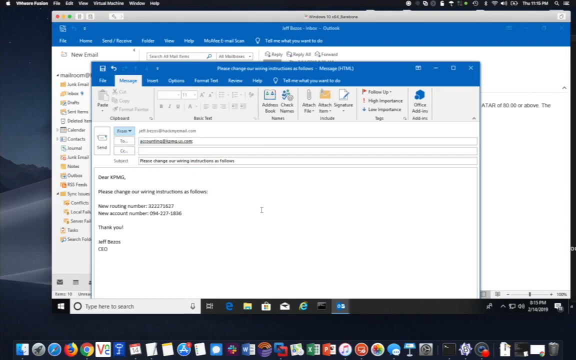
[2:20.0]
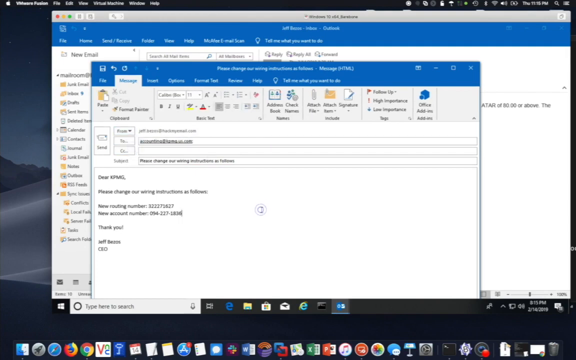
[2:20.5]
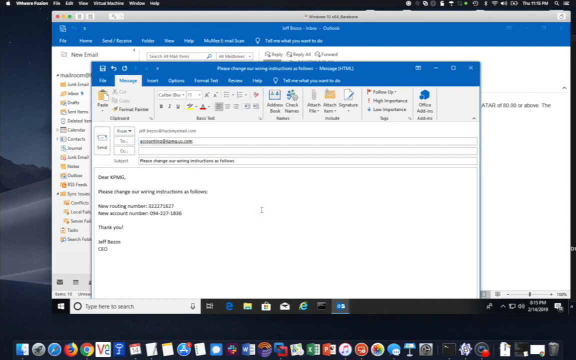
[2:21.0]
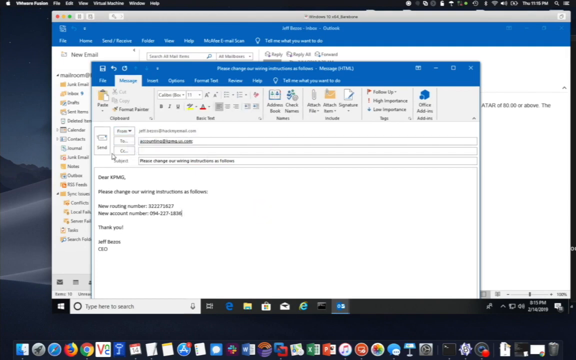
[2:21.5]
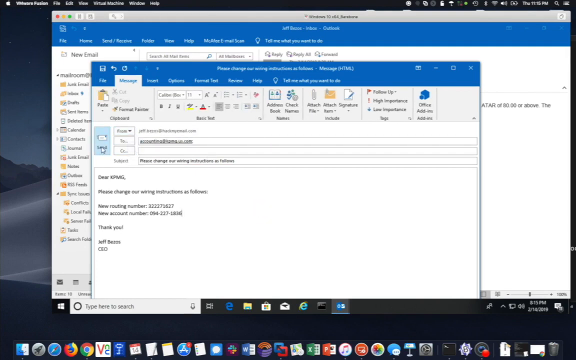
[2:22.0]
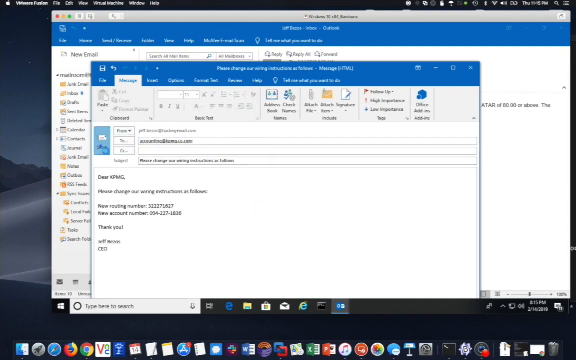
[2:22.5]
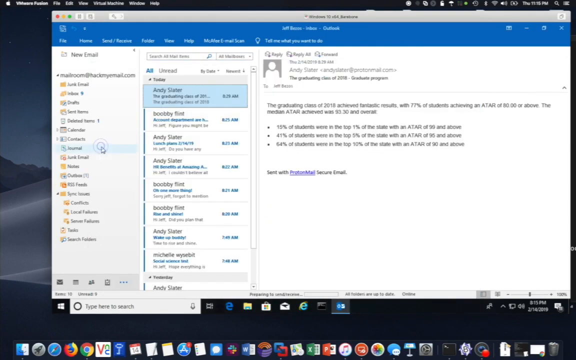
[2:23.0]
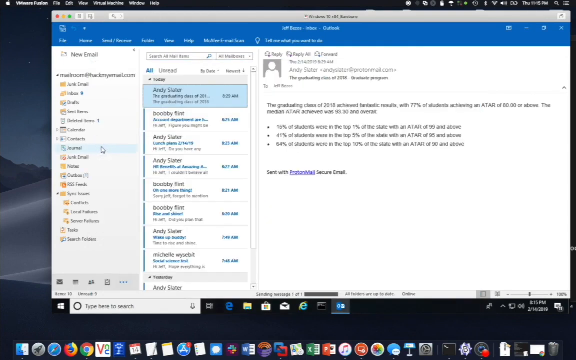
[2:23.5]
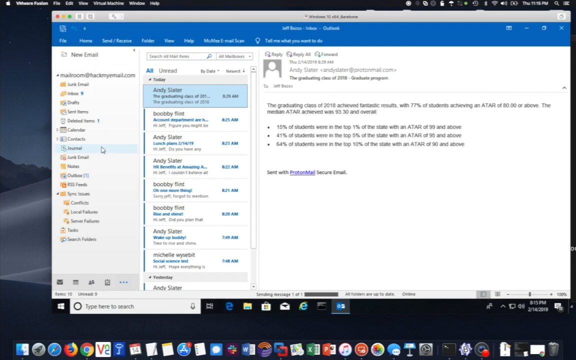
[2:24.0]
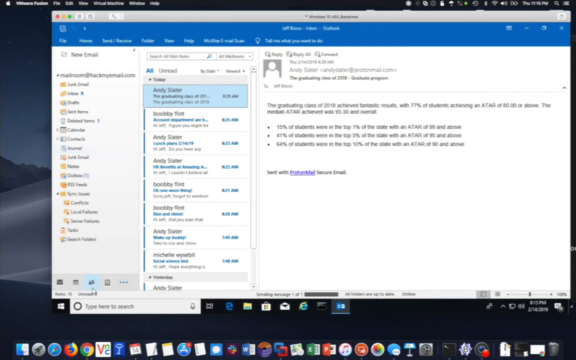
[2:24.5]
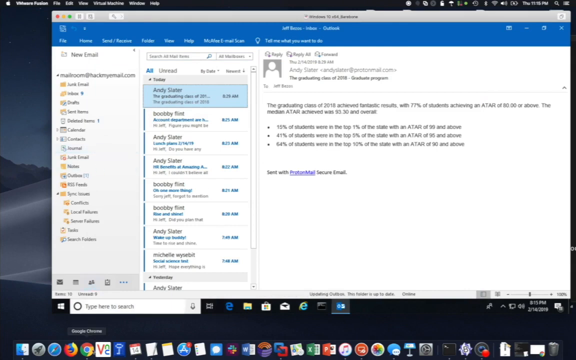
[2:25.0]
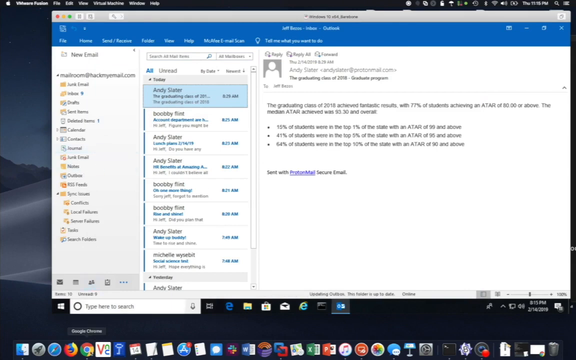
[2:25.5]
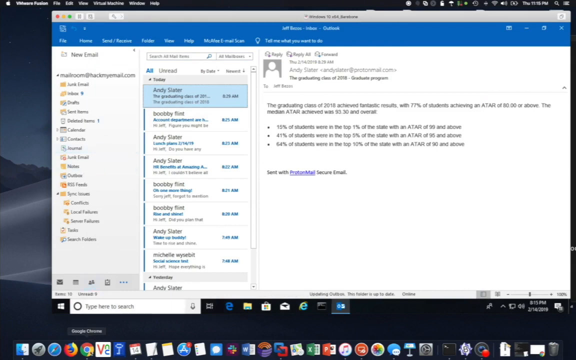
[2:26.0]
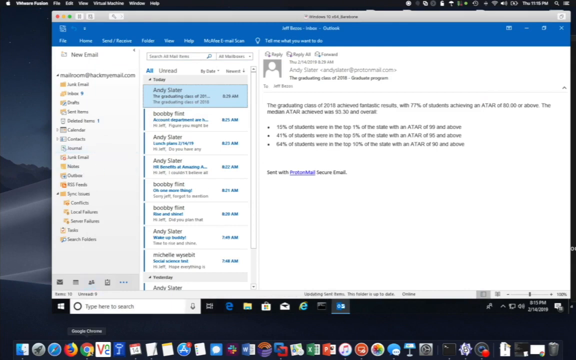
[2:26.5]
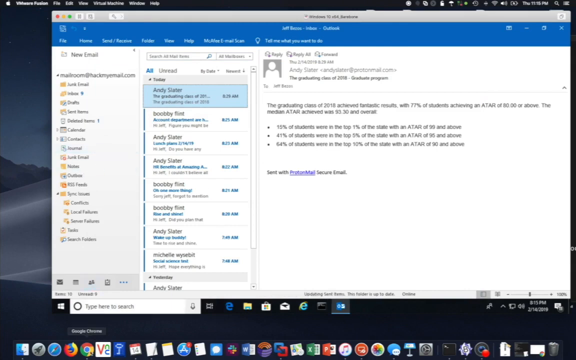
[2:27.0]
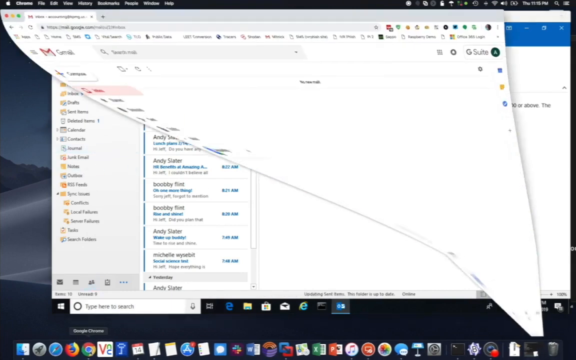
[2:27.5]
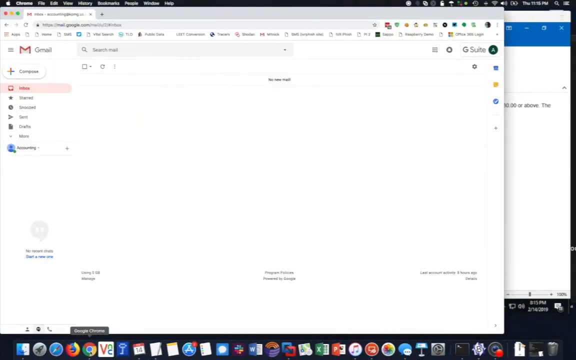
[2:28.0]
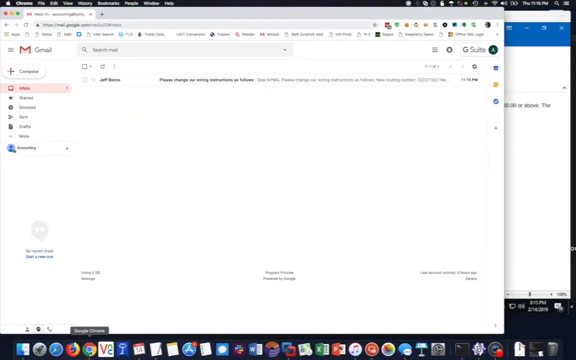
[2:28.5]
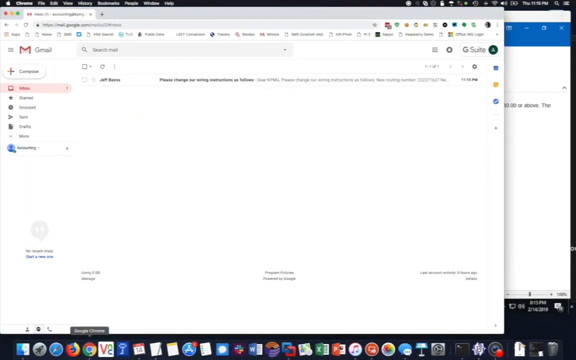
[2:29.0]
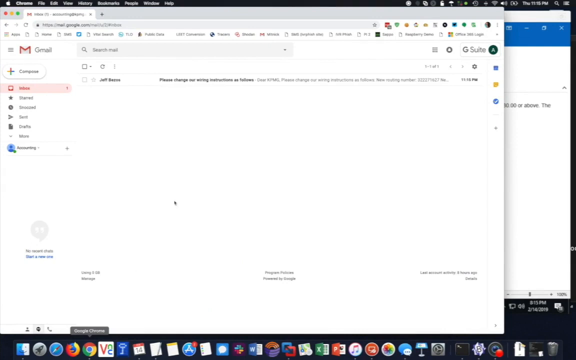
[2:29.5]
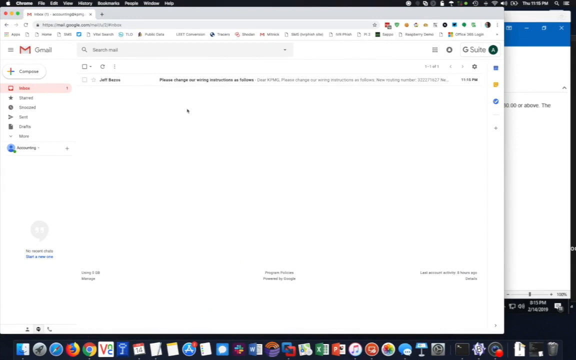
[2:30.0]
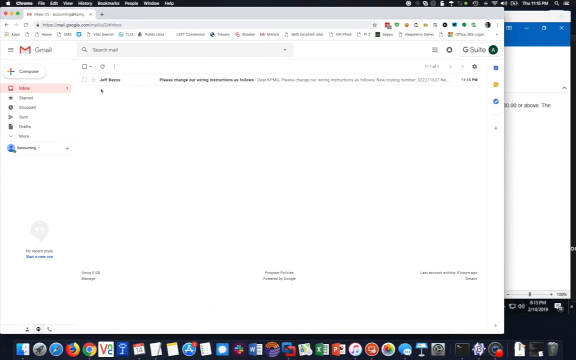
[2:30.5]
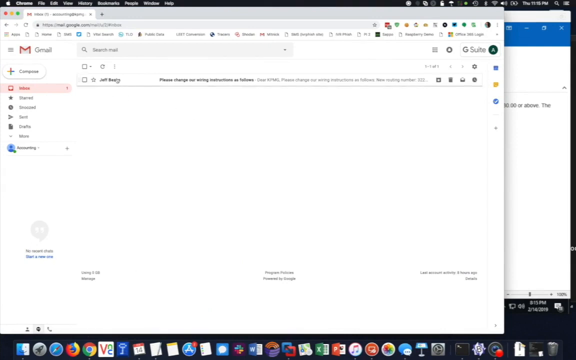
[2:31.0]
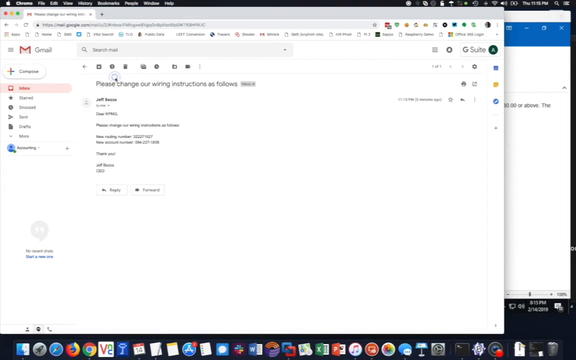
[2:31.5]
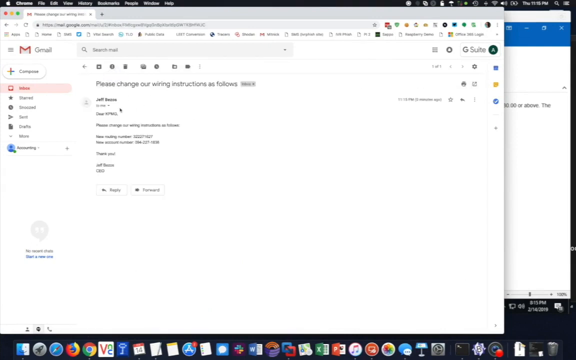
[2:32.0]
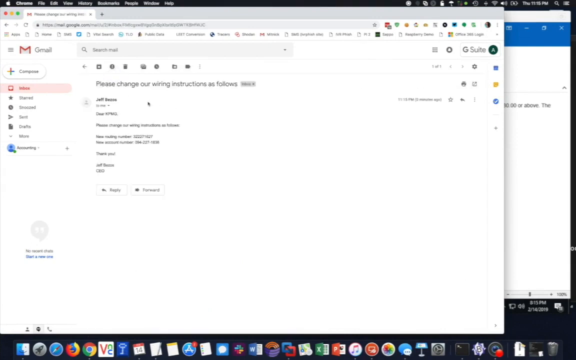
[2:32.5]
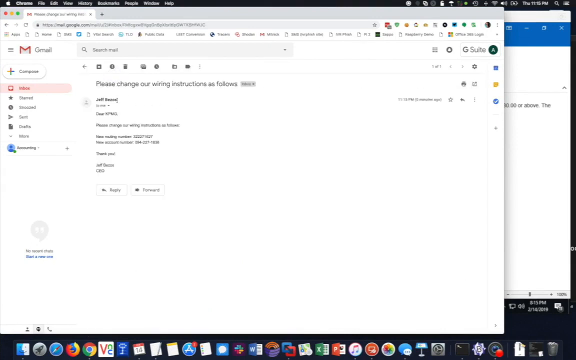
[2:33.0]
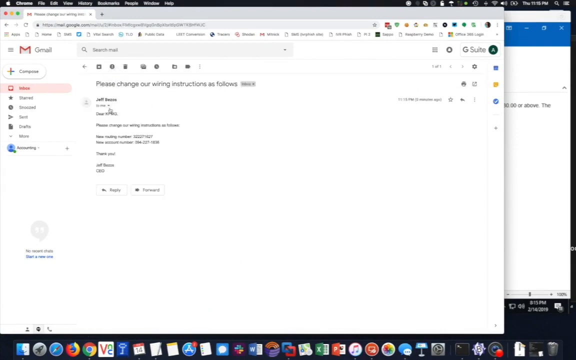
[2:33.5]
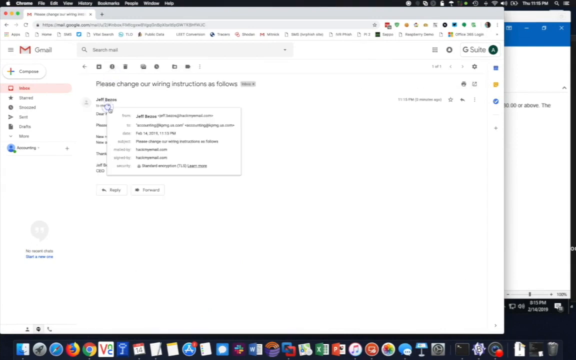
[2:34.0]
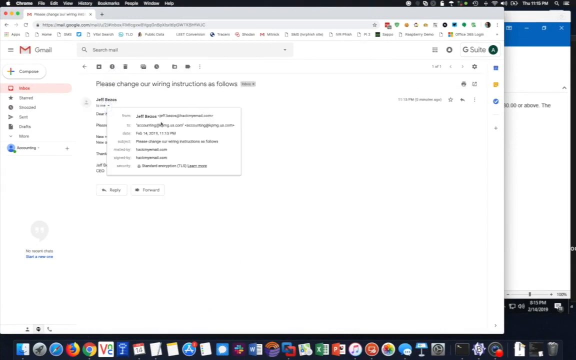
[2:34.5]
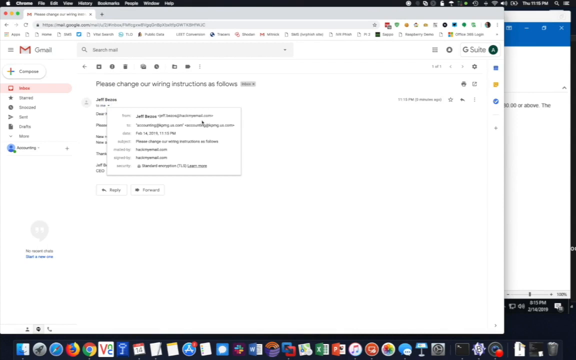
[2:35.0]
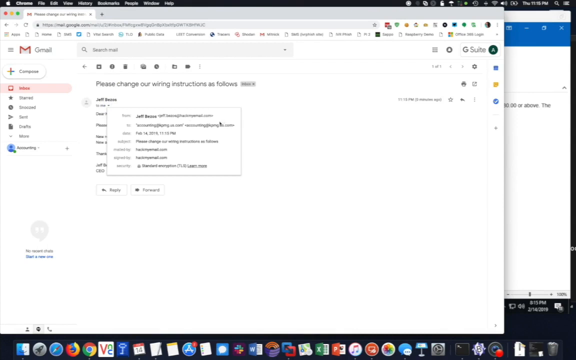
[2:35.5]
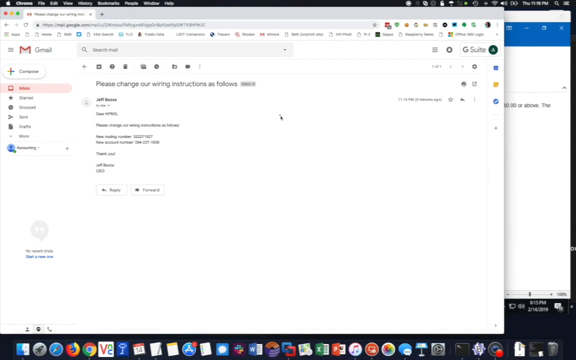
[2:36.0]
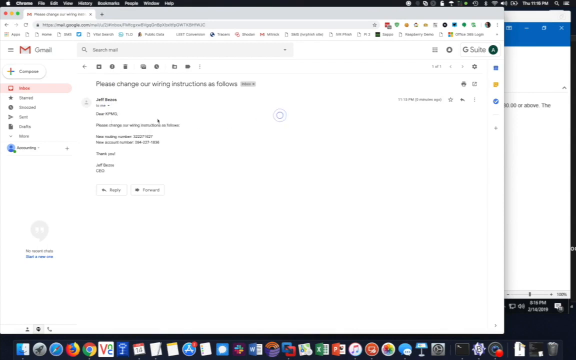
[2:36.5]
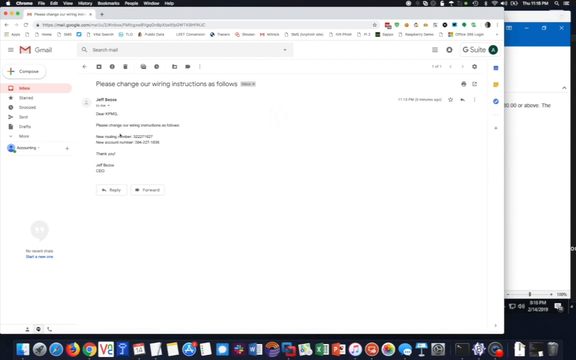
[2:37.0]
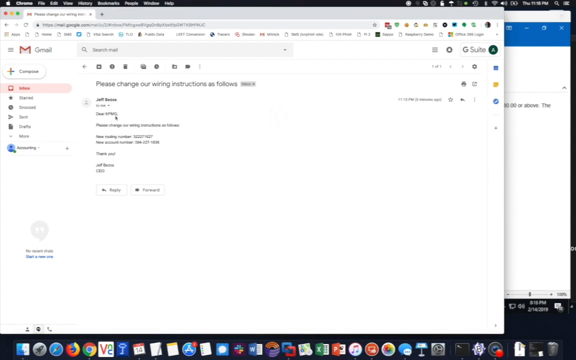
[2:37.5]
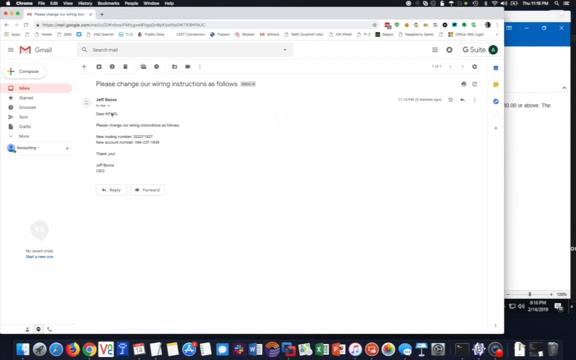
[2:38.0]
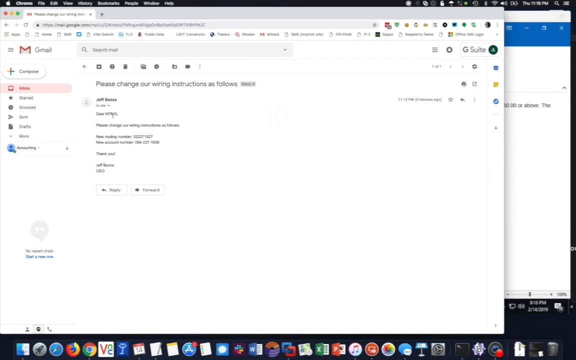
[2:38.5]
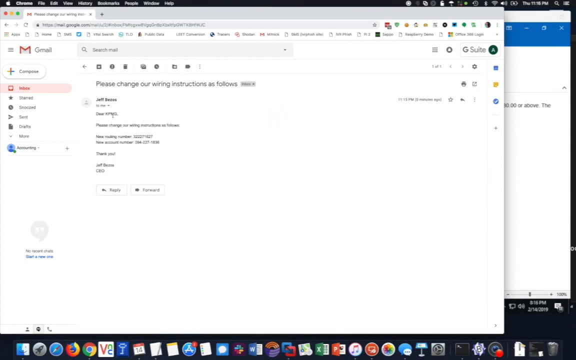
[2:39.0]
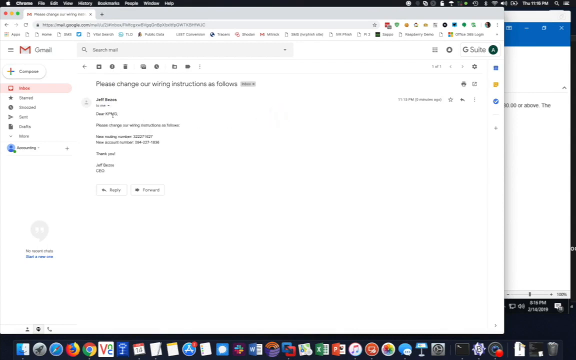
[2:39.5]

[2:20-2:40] Two pages are open on a computer screen: the larger page in the back is an email homepage that looks like Outlook, and the smaller page in front is the message page. An email has been typed. The video is slightly blurry, but the email looks as if it reads "Dear KPMG, Please change our wiring instructions as follows: New routing number," followed by a series of numbers, and below that "New account number," followed by another series of numbers. It then reads "Thank you," and the name at the bottom is Jeff Bezos, CEO. The cursor clicks the send button on the left, and the view returns to the email homepage, which shows a list of emails with the top one, highlighted, being Andy Slater. At the very top of the screen it says "Jeff Bezos Inbox Outlook." The page then abruptly changes to a Gmail home page, which opens to a copy of the same email. The cursor clicks the name Jeff Bezos and a box appears with details about the email.